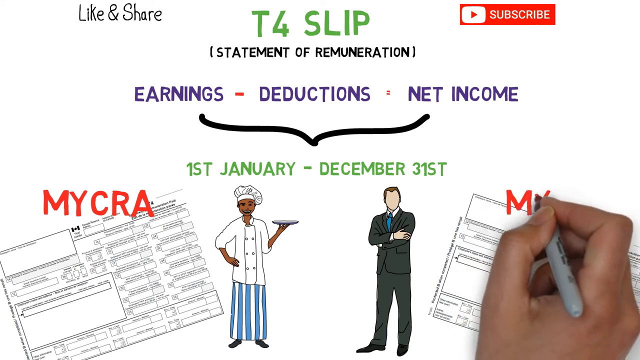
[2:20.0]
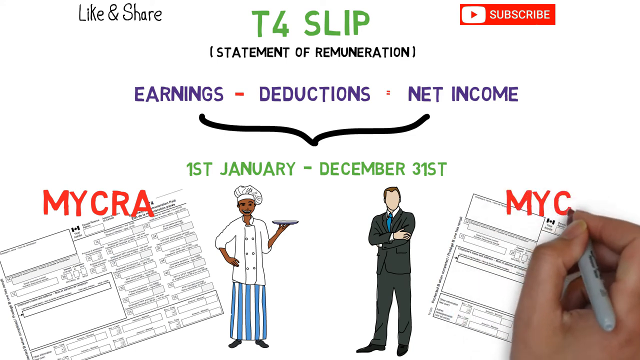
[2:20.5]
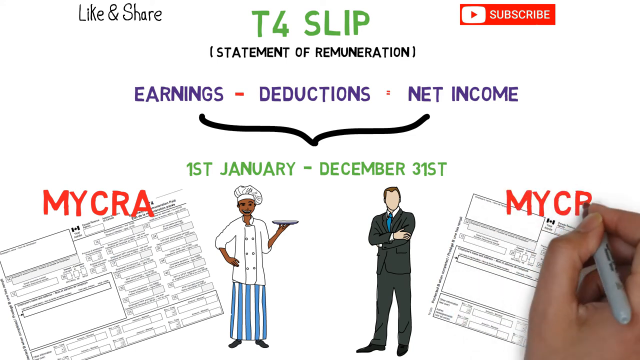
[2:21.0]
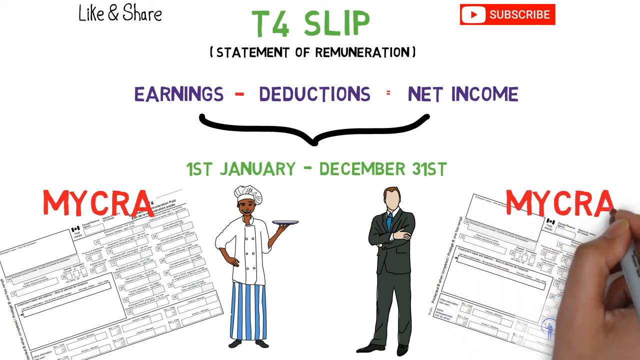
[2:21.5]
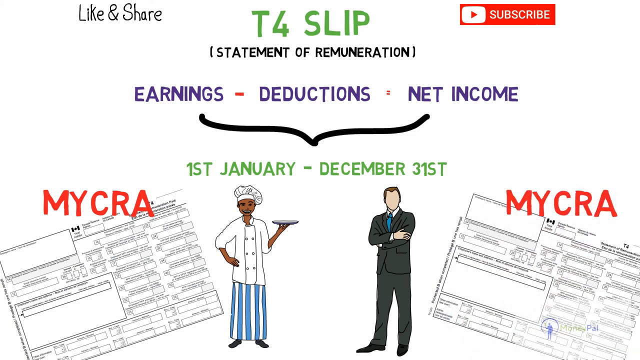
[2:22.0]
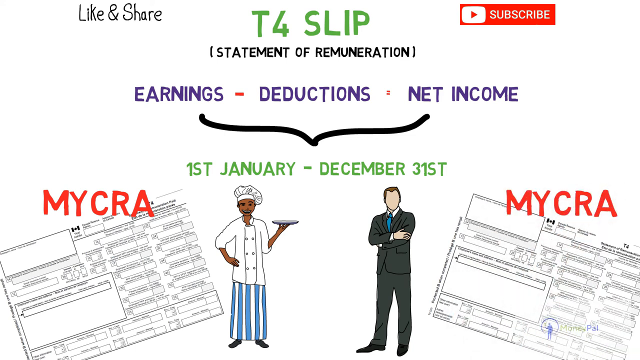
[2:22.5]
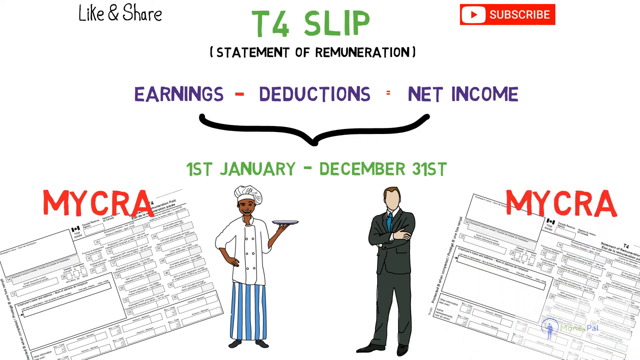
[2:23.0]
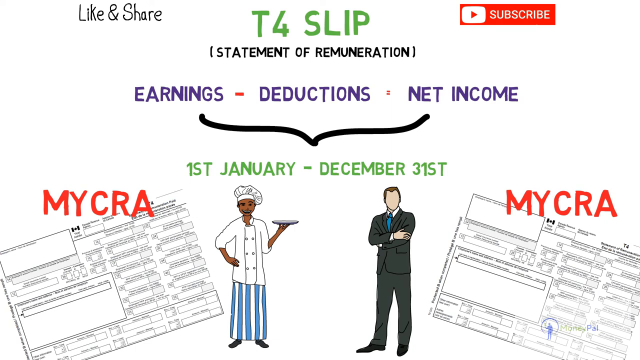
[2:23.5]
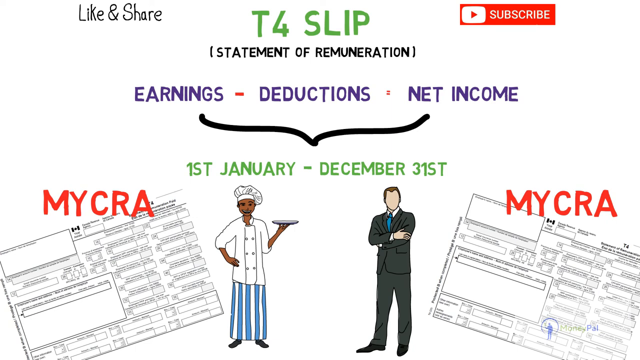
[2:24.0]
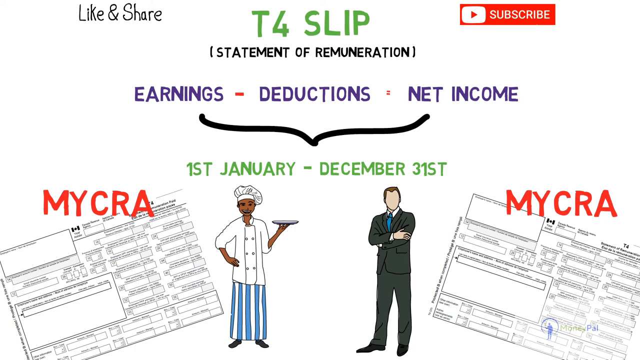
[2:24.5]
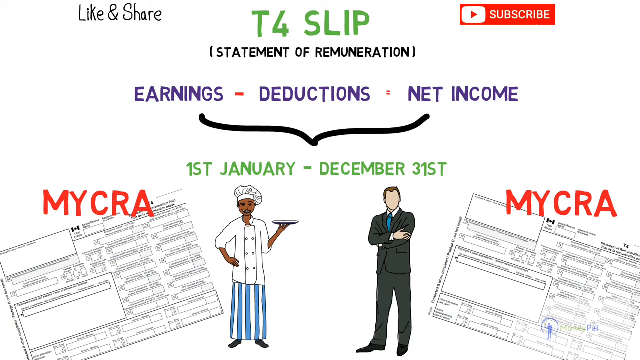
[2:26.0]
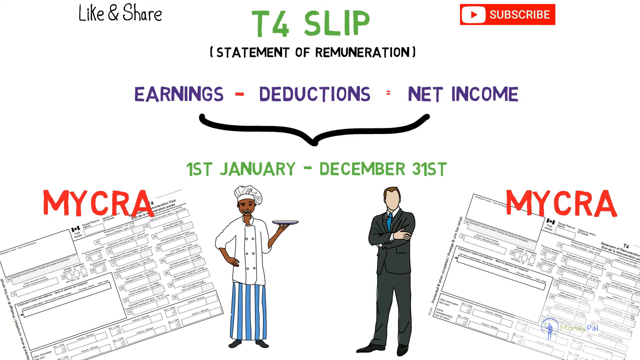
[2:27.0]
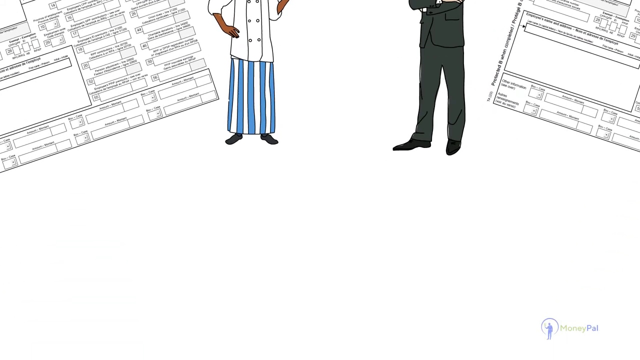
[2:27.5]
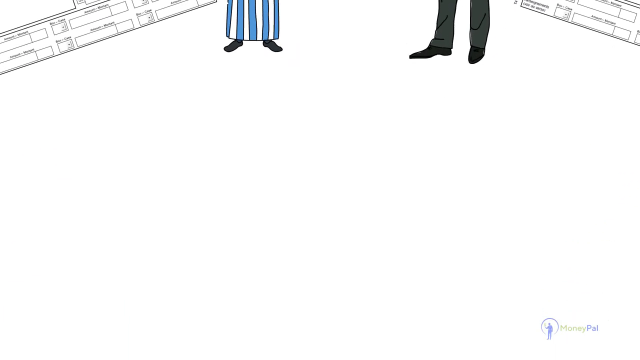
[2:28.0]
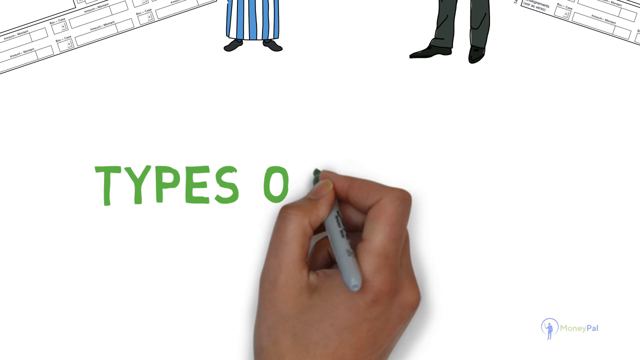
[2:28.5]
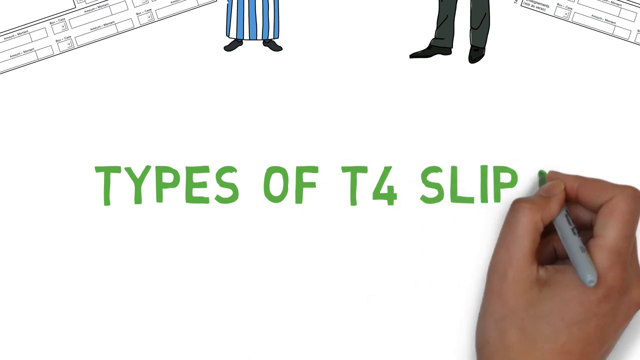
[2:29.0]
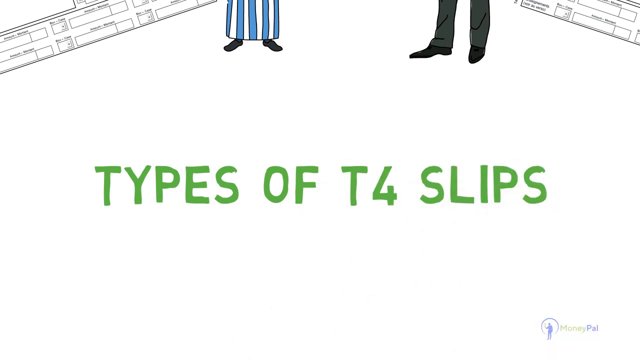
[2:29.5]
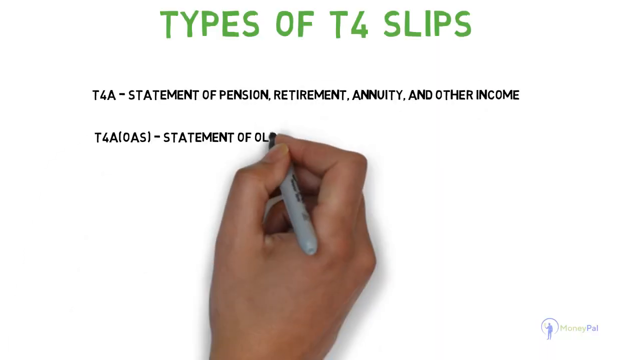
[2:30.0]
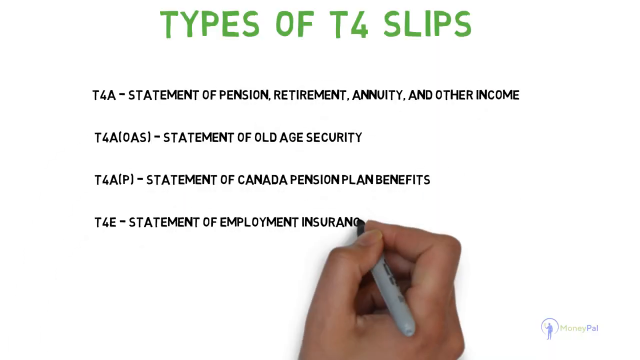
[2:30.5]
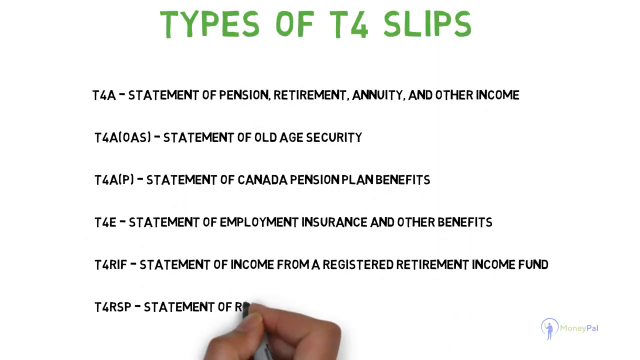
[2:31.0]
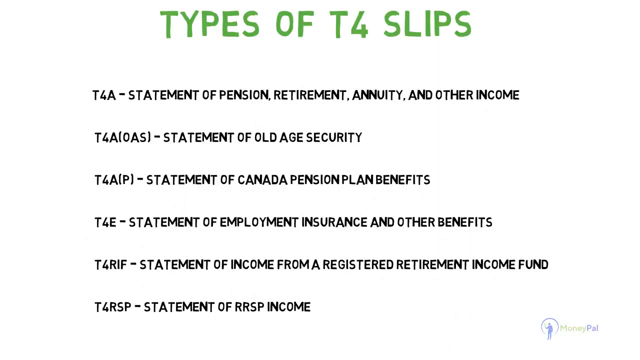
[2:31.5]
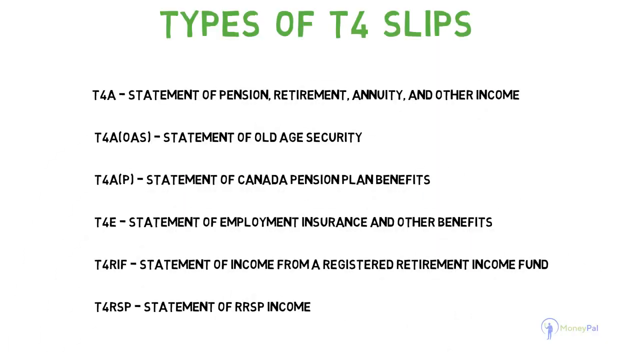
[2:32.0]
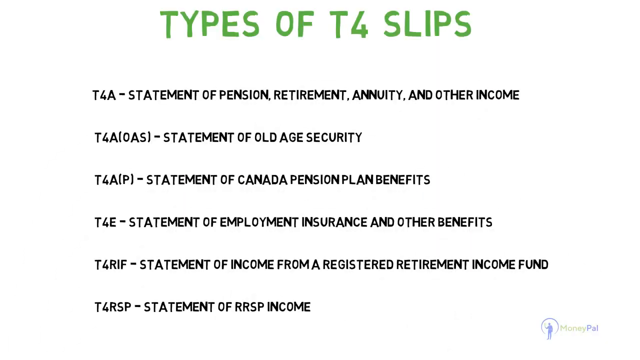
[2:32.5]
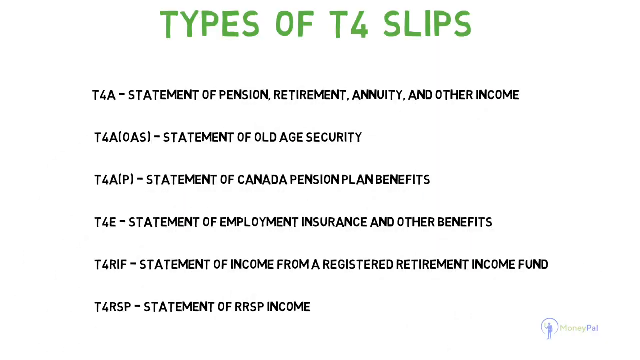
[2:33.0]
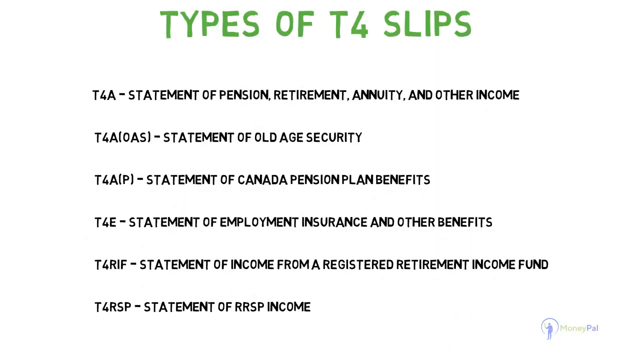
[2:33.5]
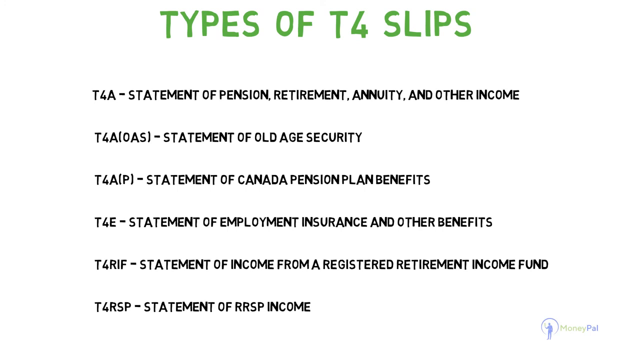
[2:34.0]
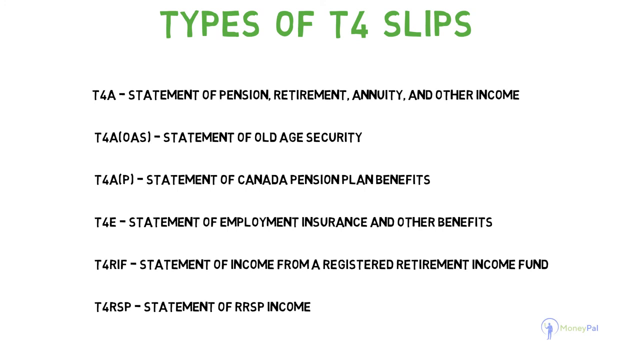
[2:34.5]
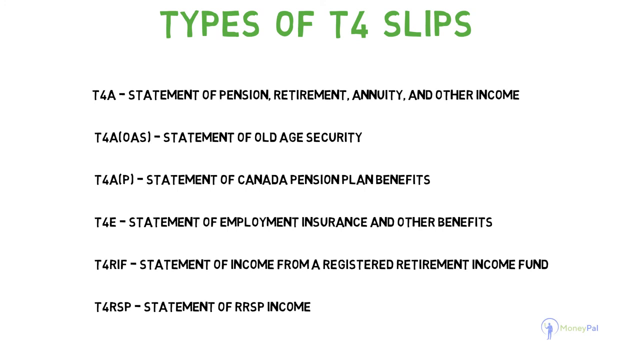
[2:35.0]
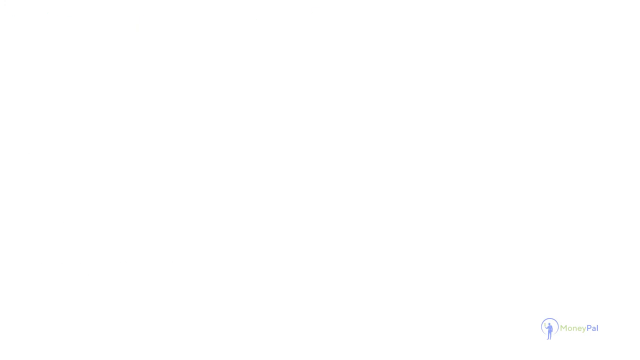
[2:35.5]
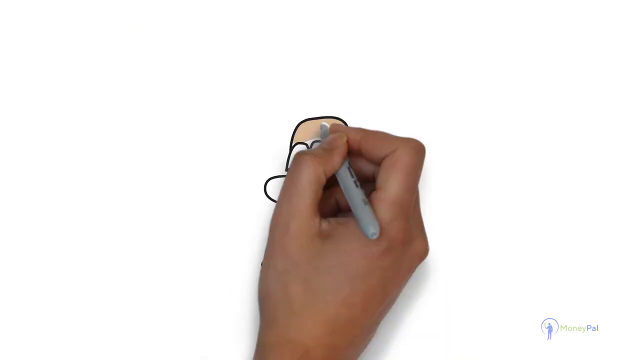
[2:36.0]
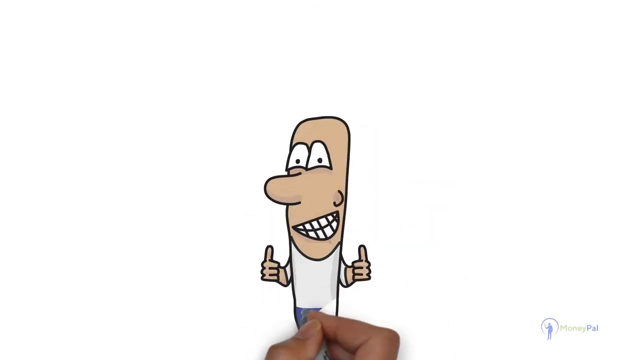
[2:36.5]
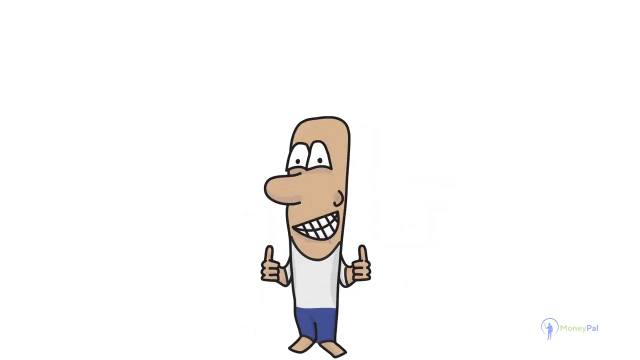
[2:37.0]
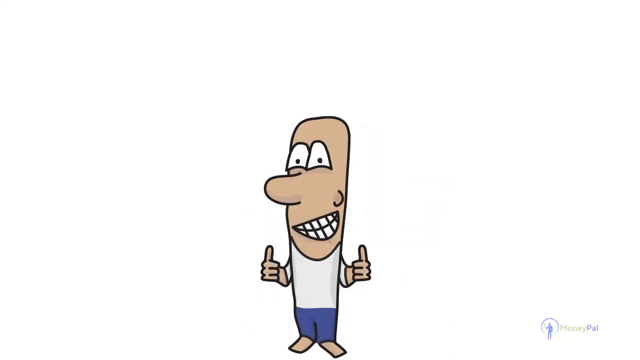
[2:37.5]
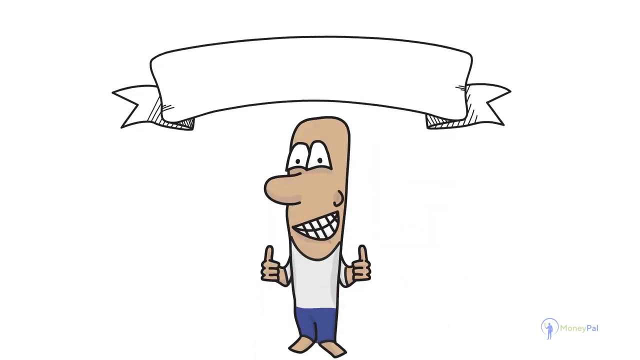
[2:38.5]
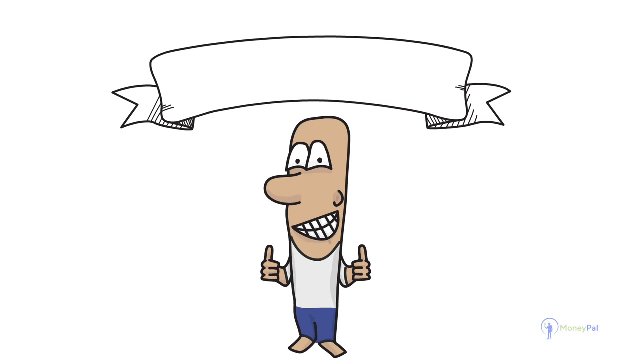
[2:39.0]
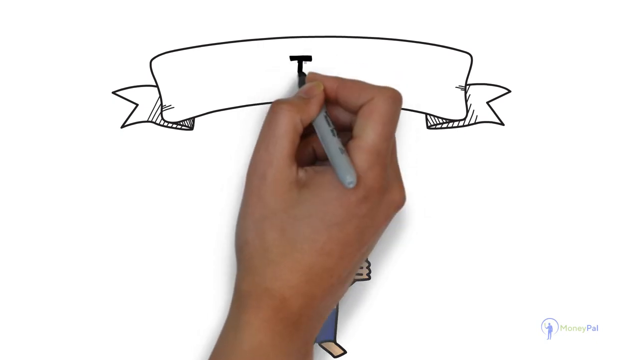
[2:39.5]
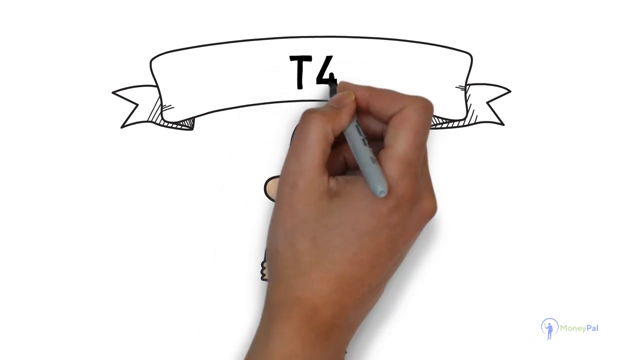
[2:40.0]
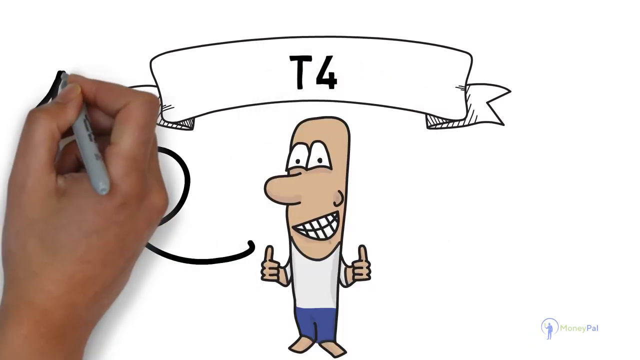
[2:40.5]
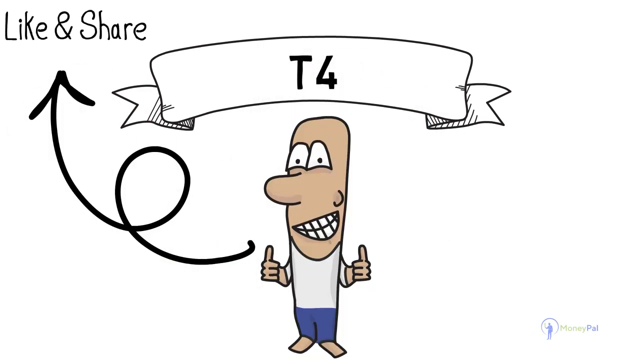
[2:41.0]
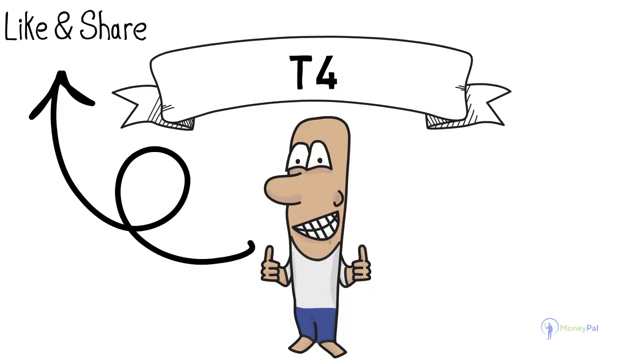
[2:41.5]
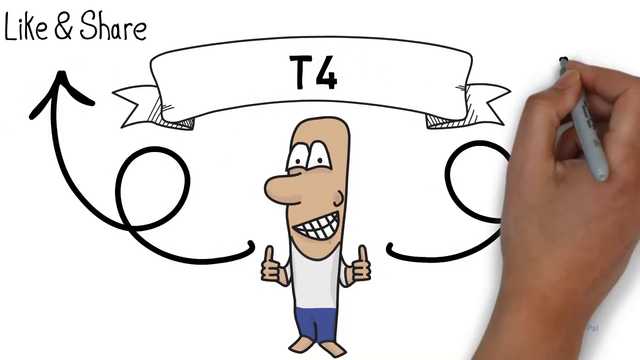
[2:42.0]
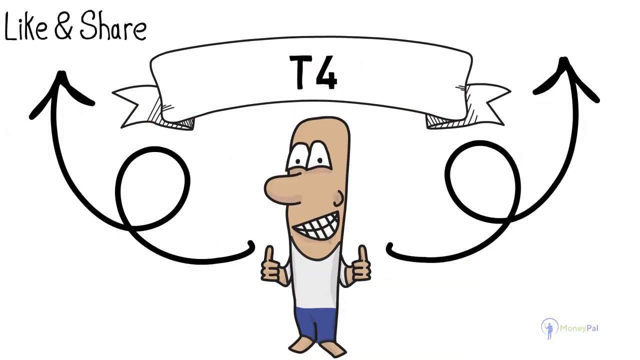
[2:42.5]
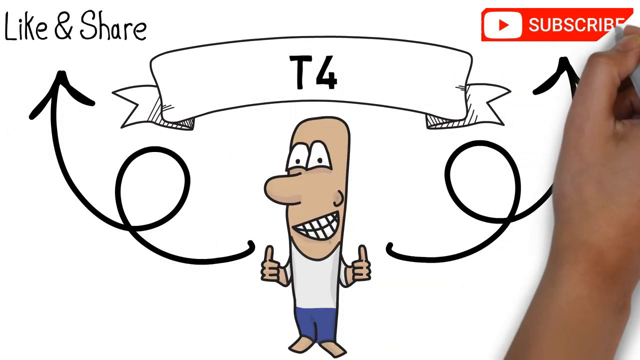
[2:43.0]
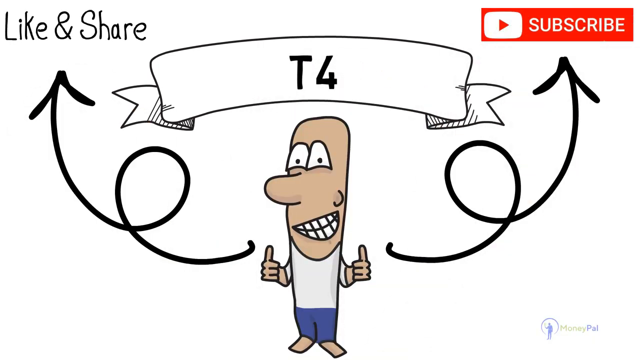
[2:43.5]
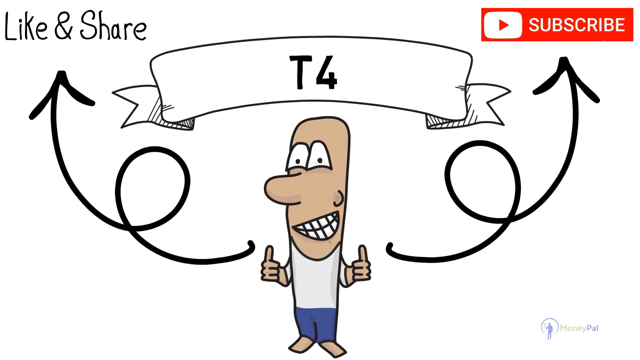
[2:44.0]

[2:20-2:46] "MYCRA" is written by the person holding a pen or marker that seems to change color every now and then; red is being used. The view zooms out and moves to the bottom, where green text says "types of t4 slips", followed by a list that includes "t4a statement of pension, retirement", a "t4a (OAS)" statement, a statement of Canada pension and benefits, "t4e", "t4 rsp", which seems to relate to income, and "t4". A like and subscribe prompt is then shown.